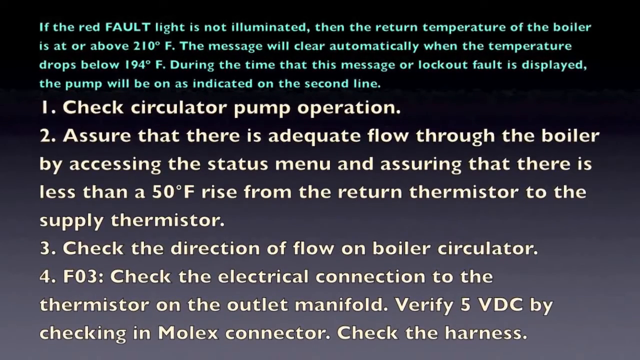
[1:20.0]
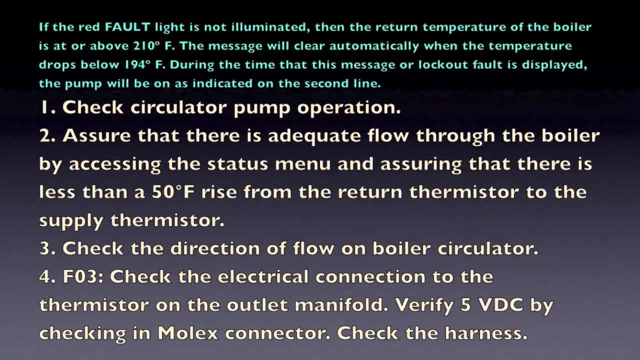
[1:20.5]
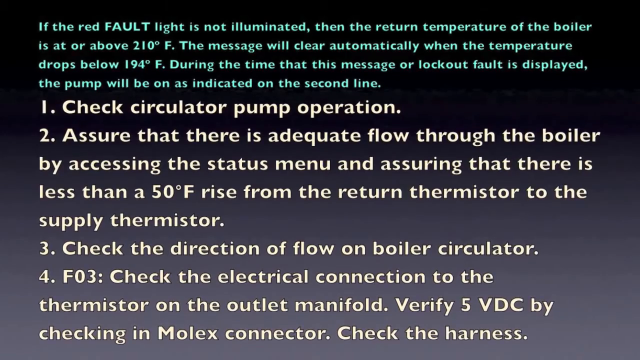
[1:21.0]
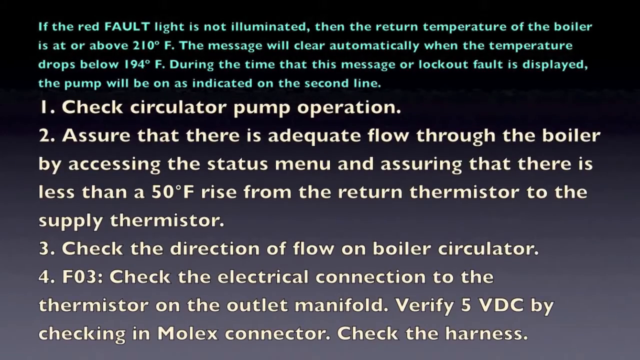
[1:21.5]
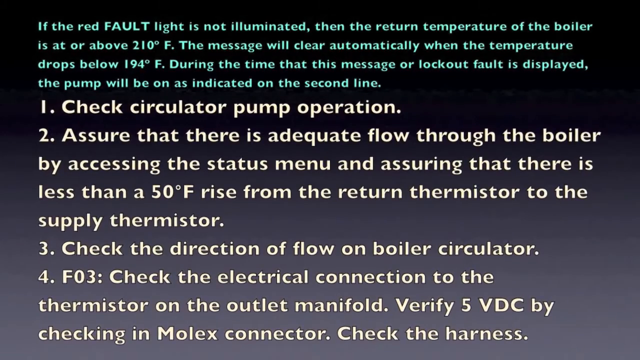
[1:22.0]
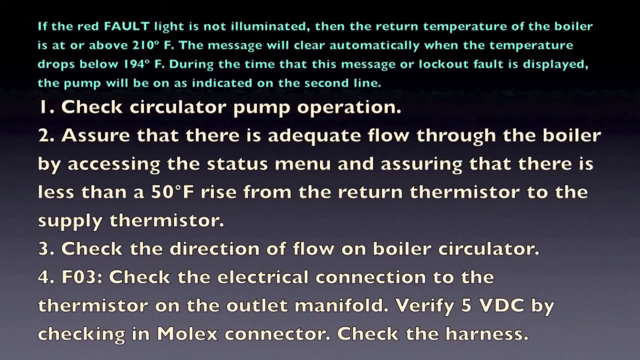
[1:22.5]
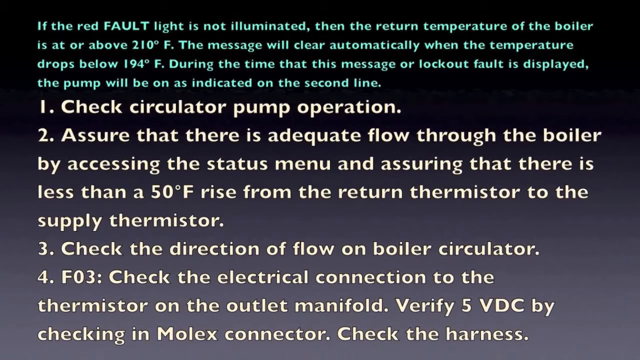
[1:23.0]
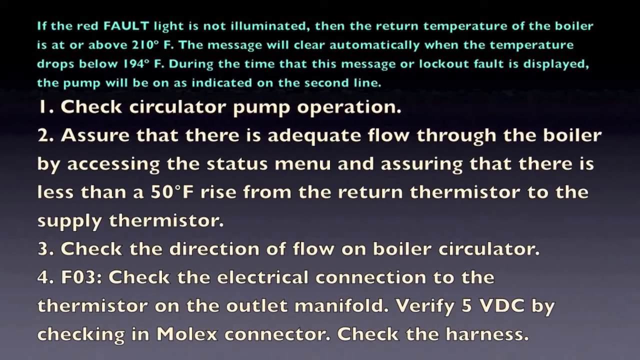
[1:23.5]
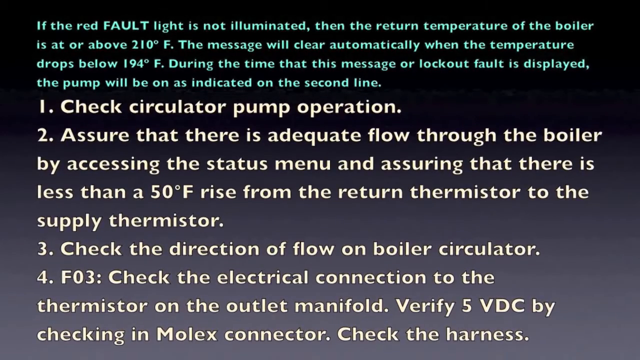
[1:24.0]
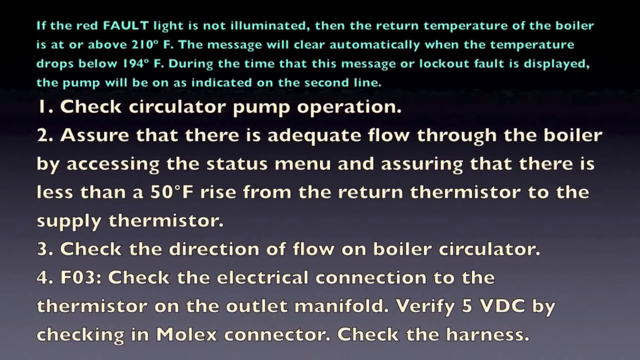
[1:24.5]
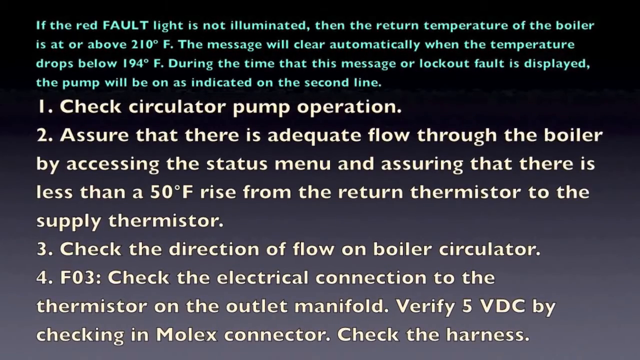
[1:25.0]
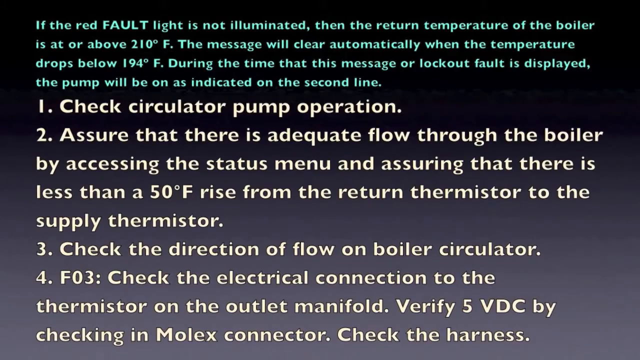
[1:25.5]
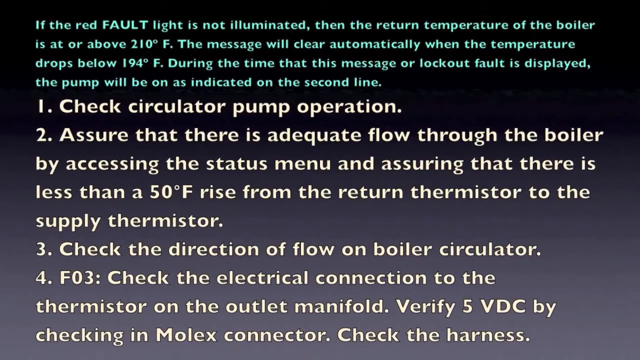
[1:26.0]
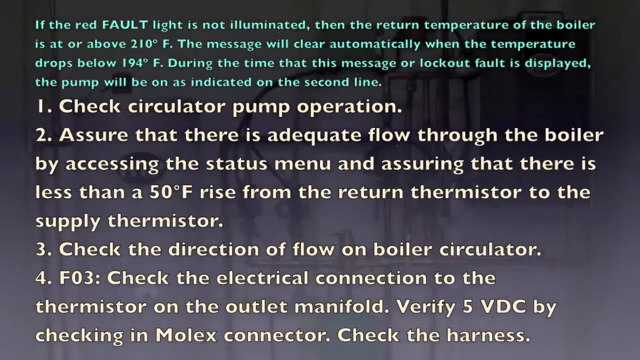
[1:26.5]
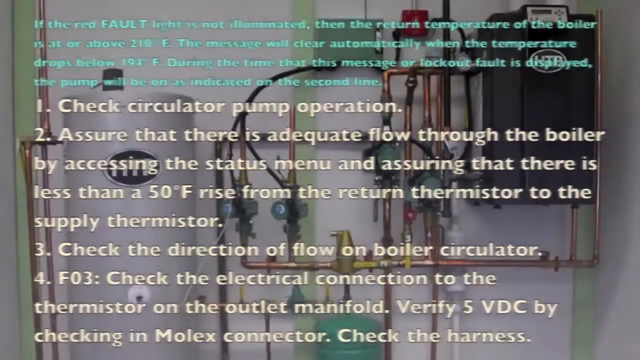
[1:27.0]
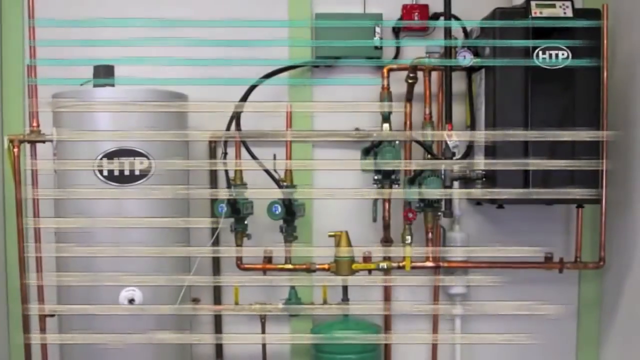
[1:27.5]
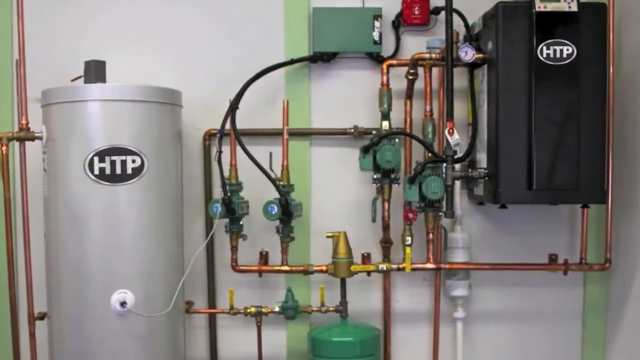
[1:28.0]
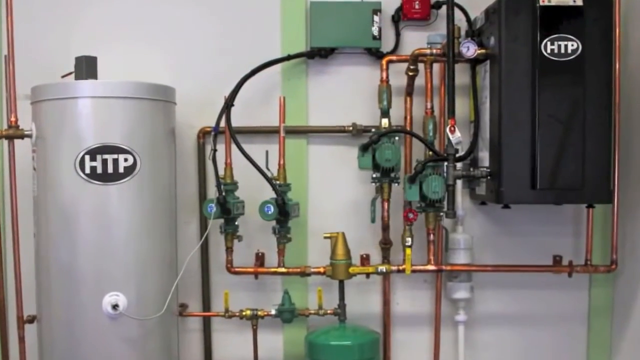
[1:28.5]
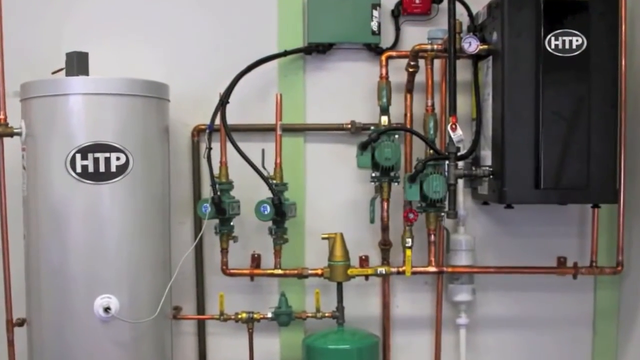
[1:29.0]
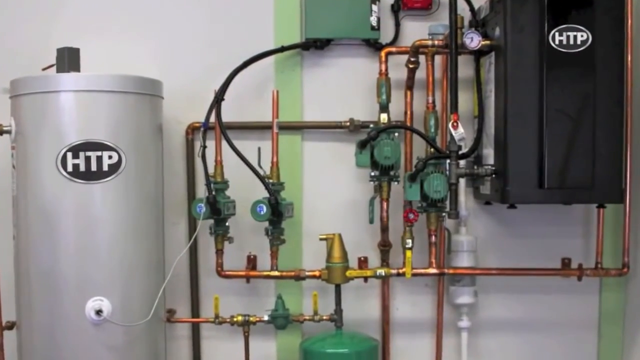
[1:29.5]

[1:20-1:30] After the text slide, the video transitions to a new scene, with the text still kind of blurred over the top of the screen before fading off completely. The new image shows a white wall with a few green vertical pieces of wood. A collection of copper pipes and fixtures is attached to a silver tank with "HTP" on the lower left, and a black box with "HTP" on it is in the upper right corner. The video uses the same slow zoom-in effect as in earlier transitions.